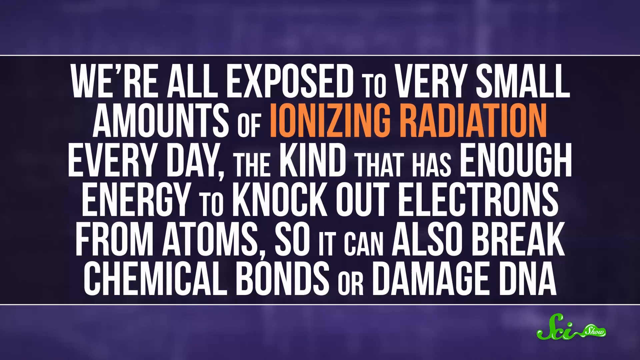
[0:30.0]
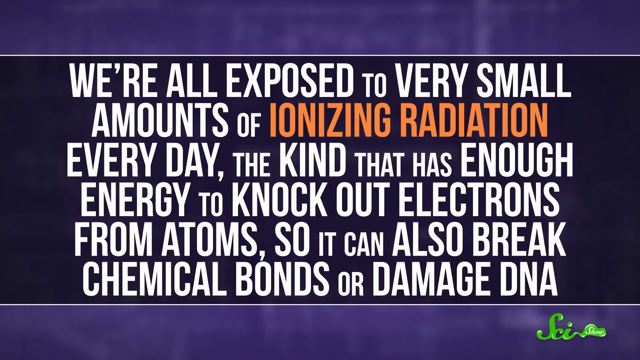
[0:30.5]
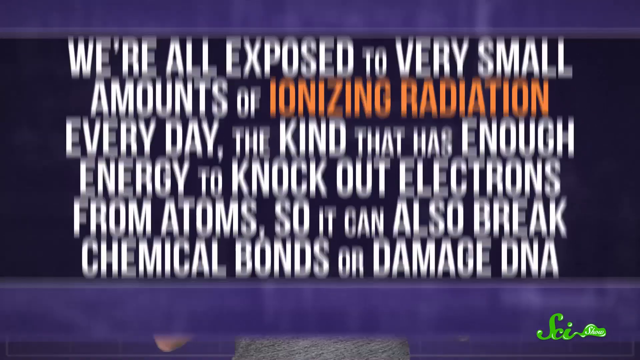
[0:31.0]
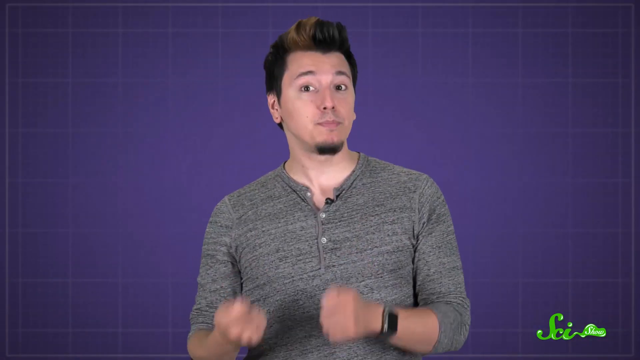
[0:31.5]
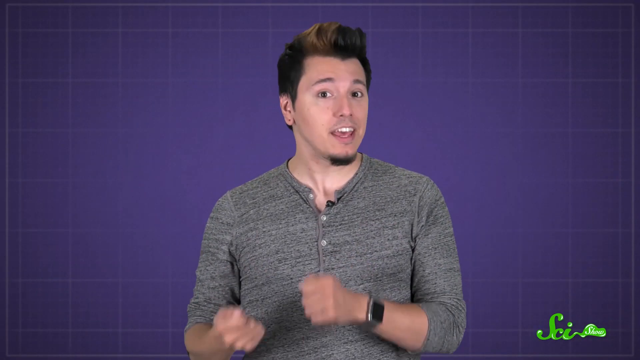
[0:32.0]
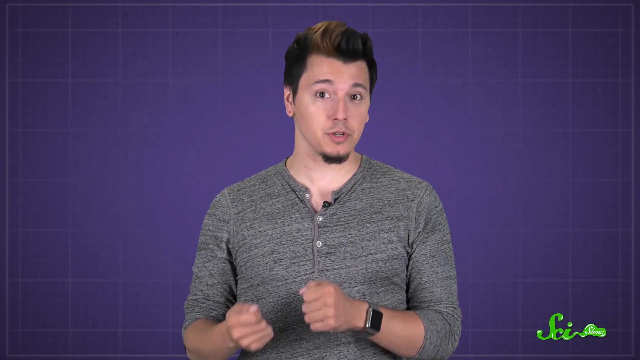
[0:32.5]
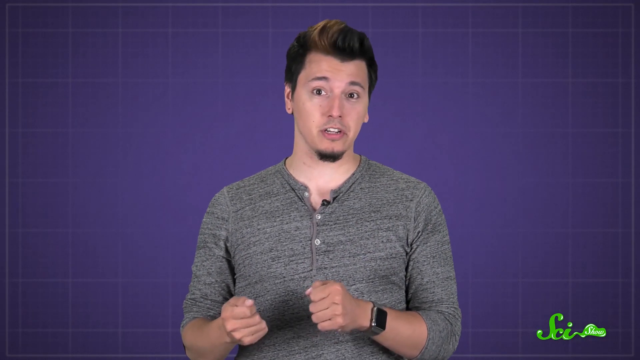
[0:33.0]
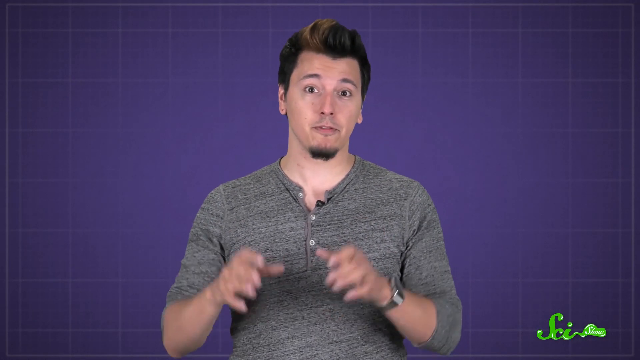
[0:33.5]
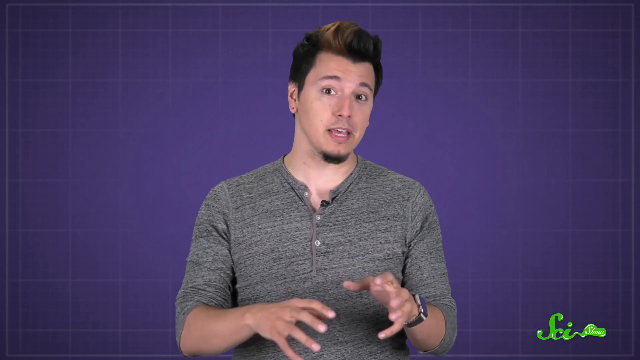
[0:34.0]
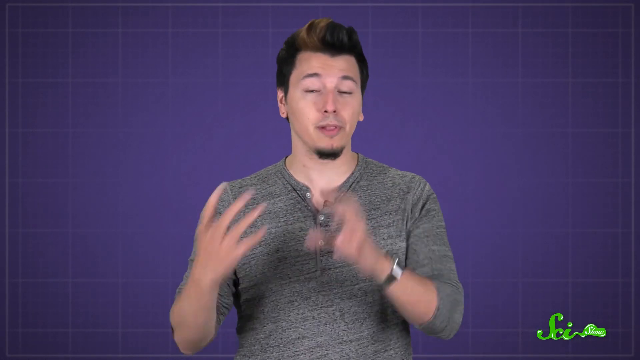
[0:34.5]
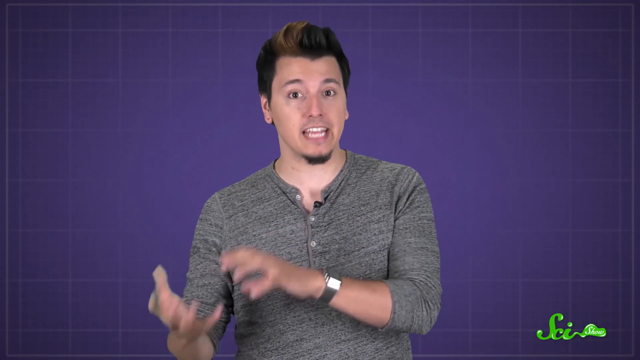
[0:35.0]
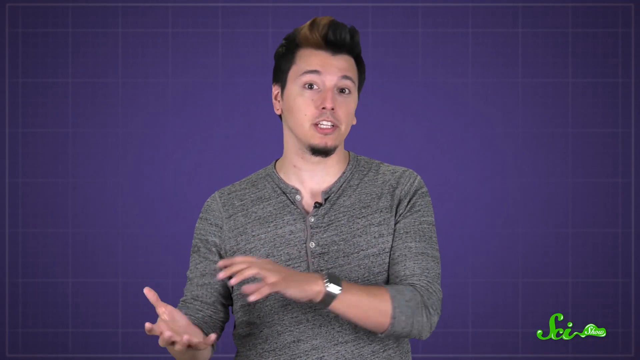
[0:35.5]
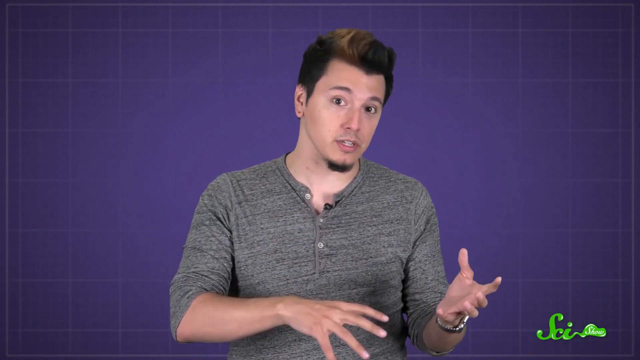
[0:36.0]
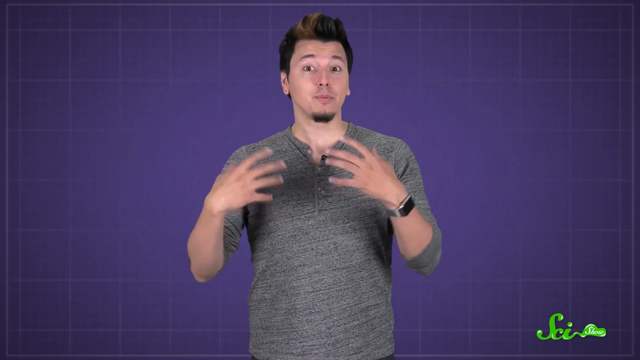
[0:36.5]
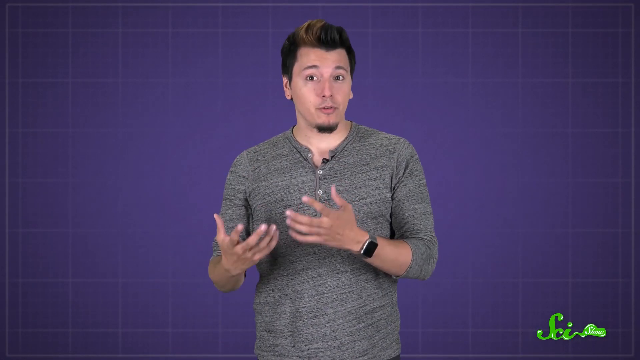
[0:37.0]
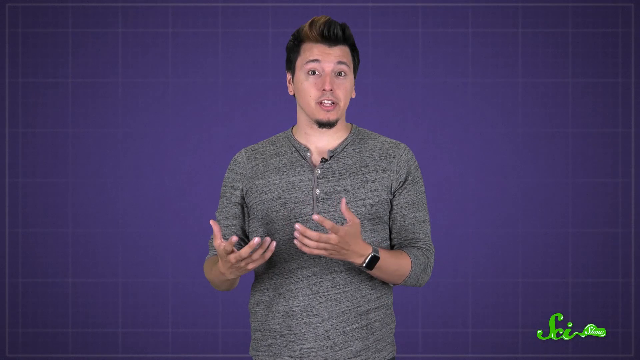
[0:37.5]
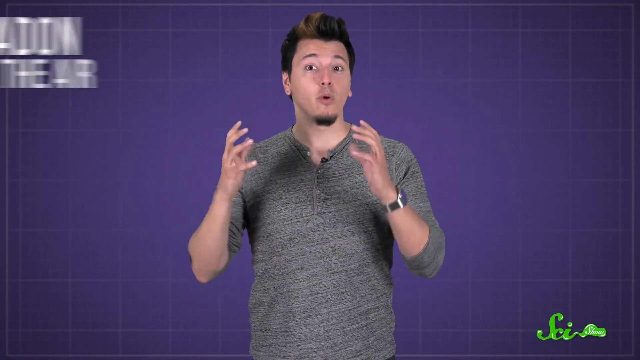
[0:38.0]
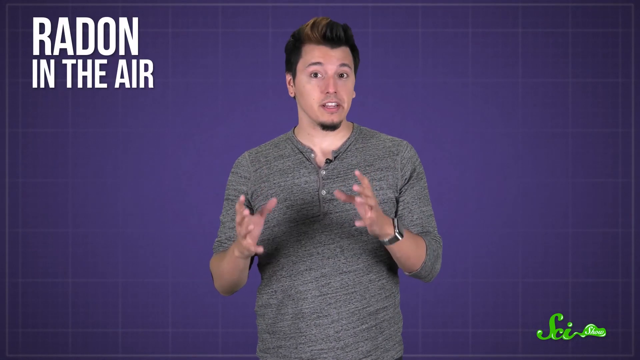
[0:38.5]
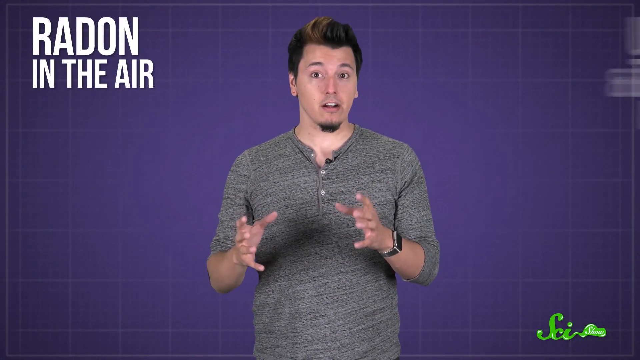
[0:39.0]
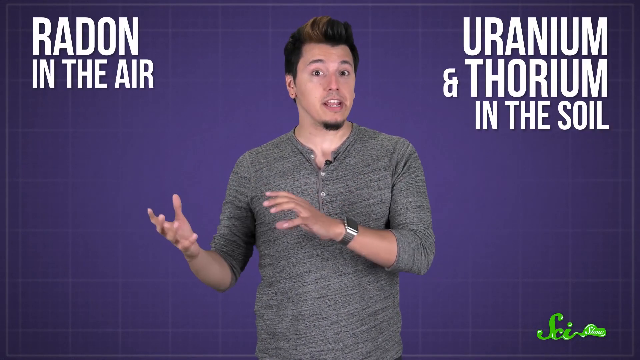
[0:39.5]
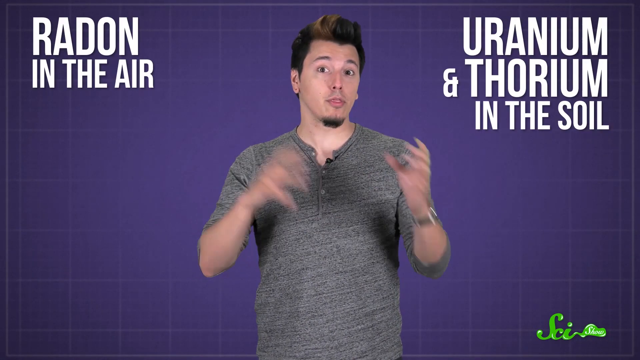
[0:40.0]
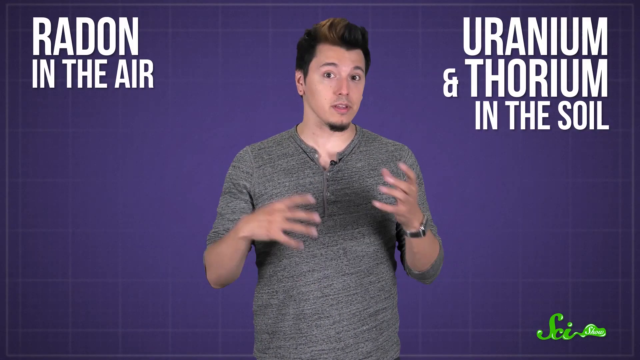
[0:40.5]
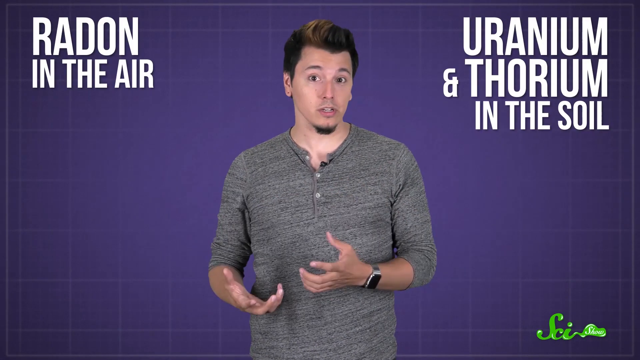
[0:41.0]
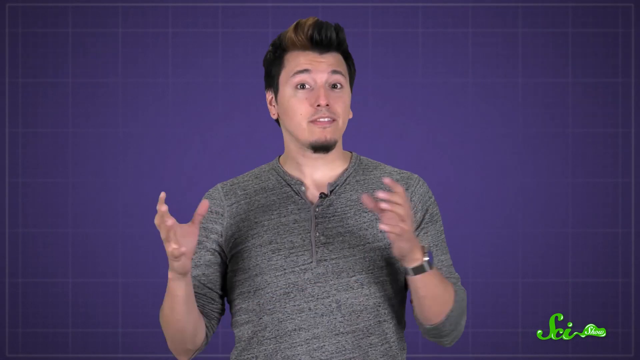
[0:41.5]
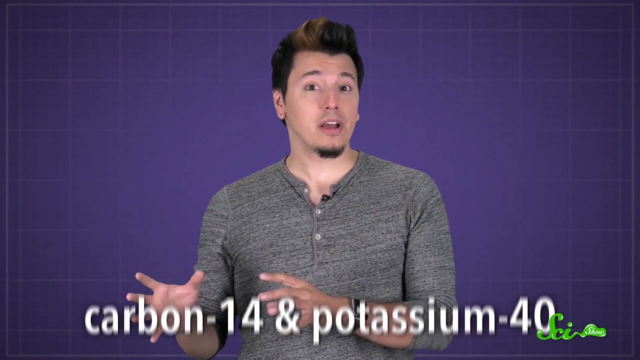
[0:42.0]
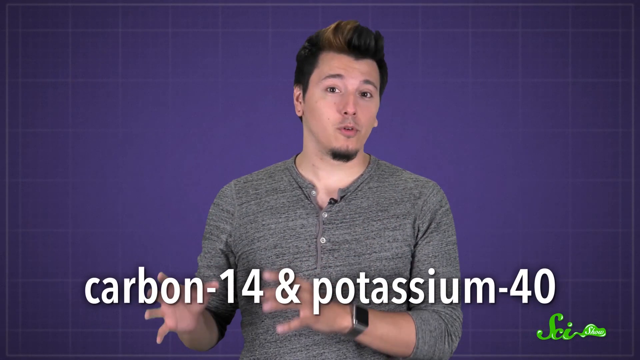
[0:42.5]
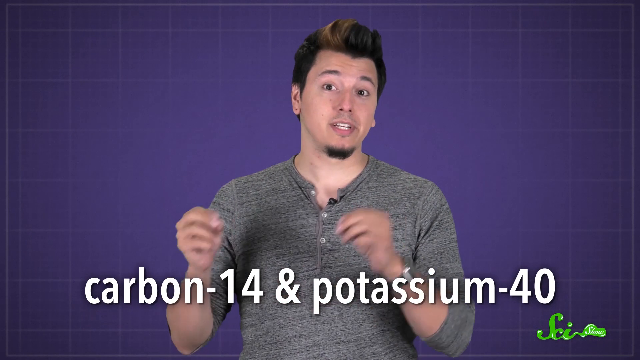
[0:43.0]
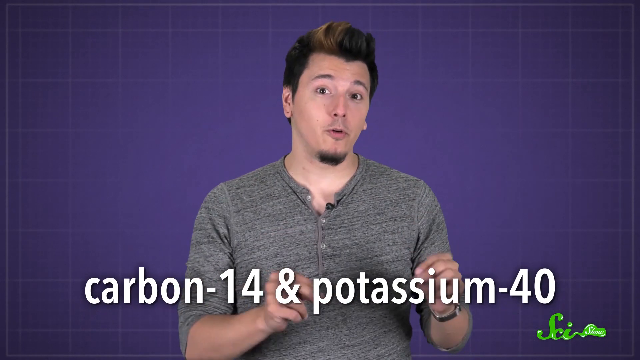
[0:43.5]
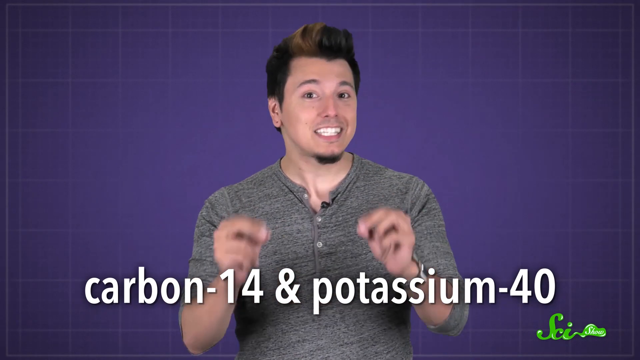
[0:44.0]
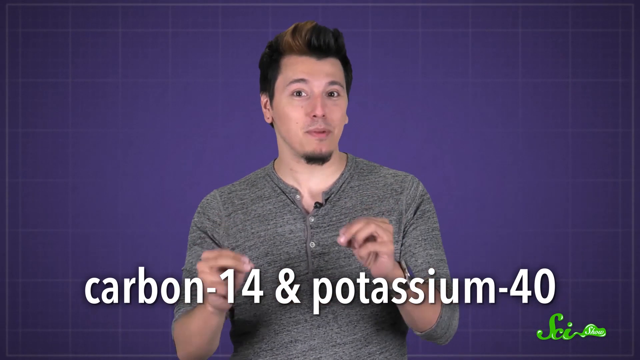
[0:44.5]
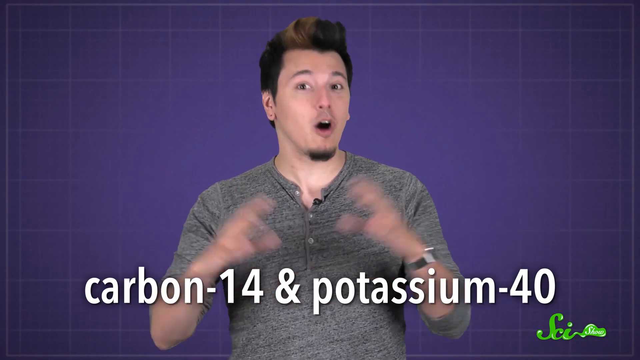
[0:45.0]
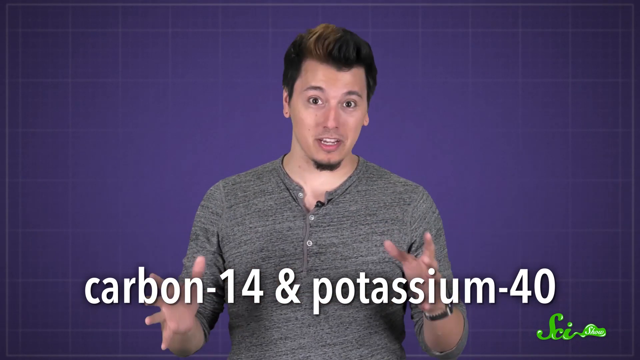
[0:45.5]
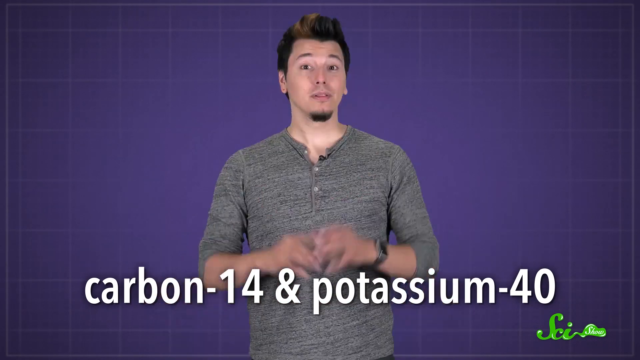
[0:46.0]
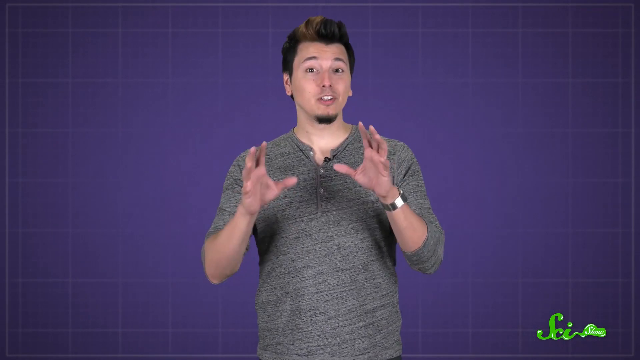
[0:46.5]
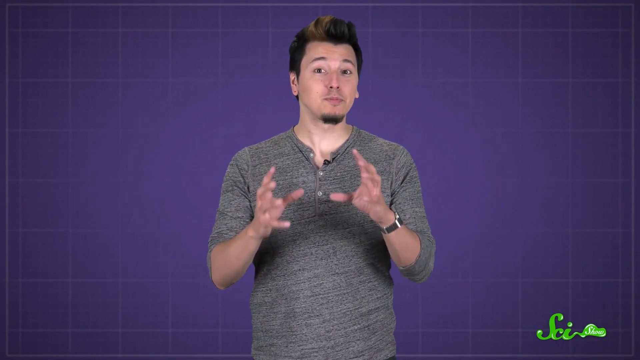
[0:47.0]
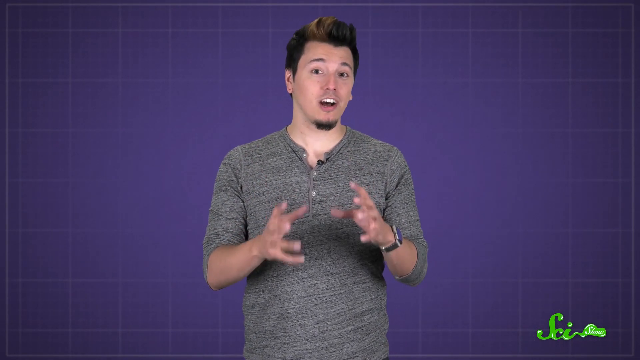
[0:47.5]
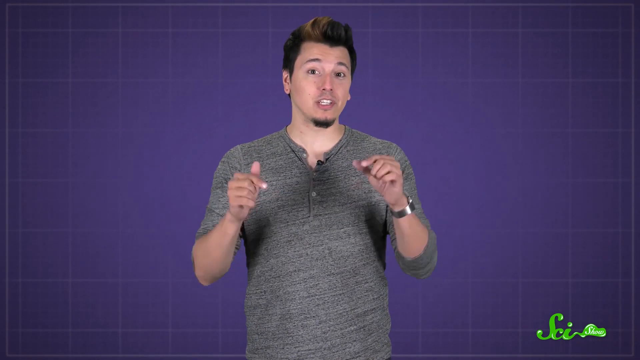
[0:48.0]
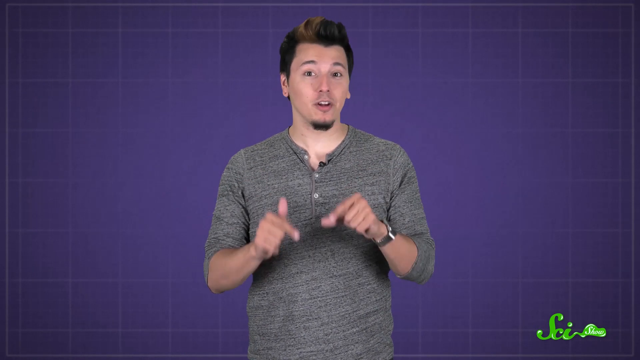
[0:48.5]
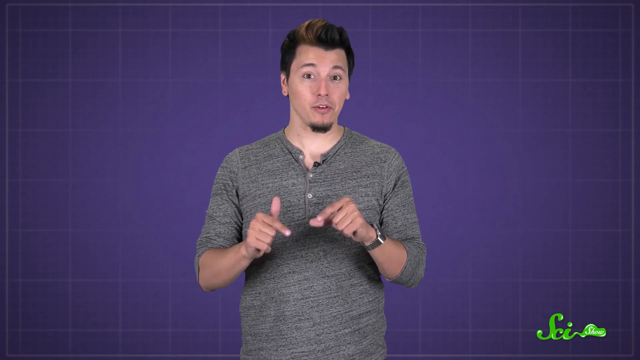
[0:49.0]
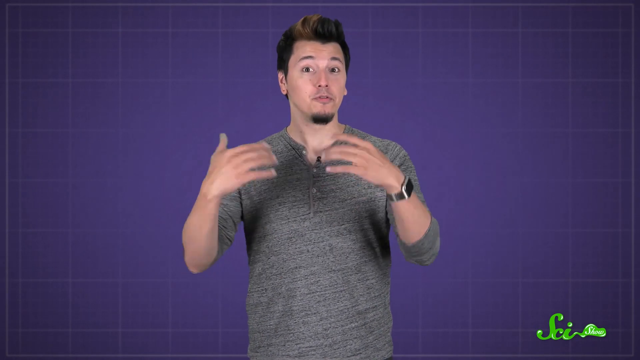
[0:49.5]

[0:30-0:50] The statement about exposure to small amounts of ionizing radiation remains on screen for a few moments, then the video returns to the narrator, who is standing with his hands in front of him. Sometimes he makes fists, sometimes his hands are open, and at times he points as he speaks, always looking directly into the camera. As he talks, text appears on the screen: in the upper corner towards his right, the phrase "Radon in the air" in large white text that stands out against the purple background. Shortly after, another phrase appears on the opposite side of the screen, to his left: "Uranium and Thorium in the soil", also in large white letters. Then, along the bottom of the screen, the statement "Carbon-14 and potassium-40" is superimposed in large white letters. He continues gesturing, sometimes bringing his fingers together.